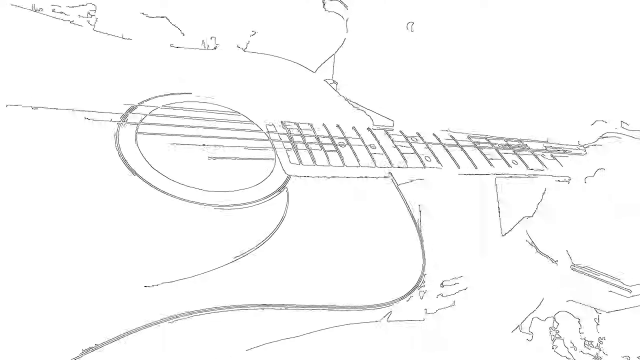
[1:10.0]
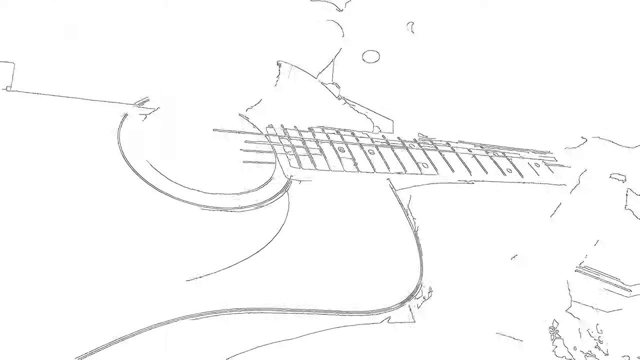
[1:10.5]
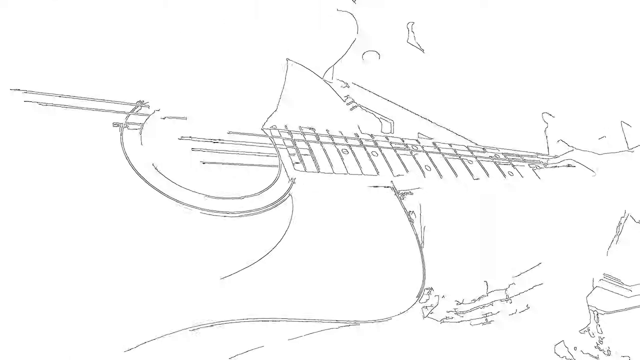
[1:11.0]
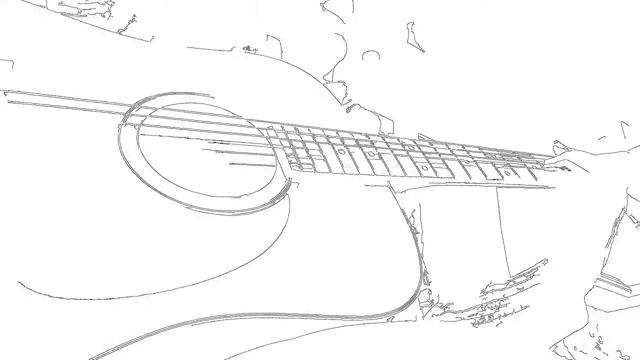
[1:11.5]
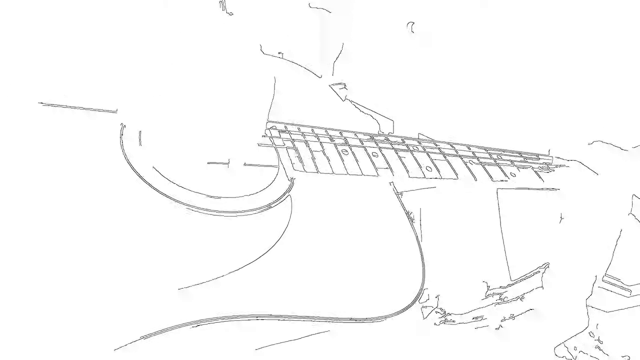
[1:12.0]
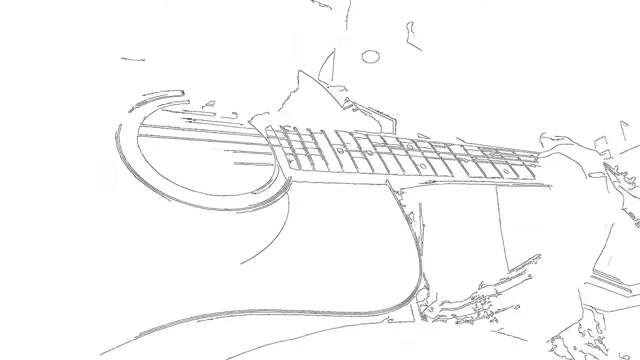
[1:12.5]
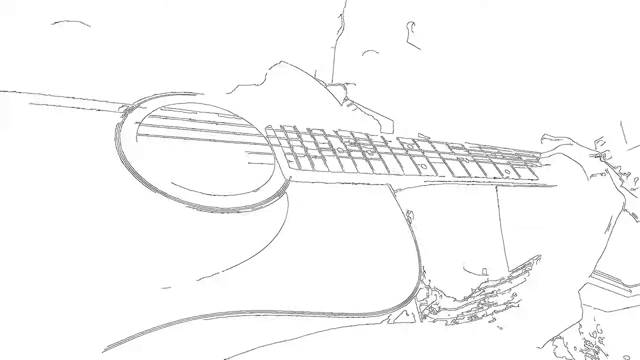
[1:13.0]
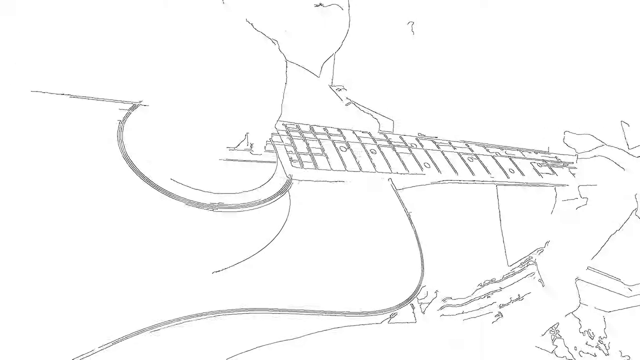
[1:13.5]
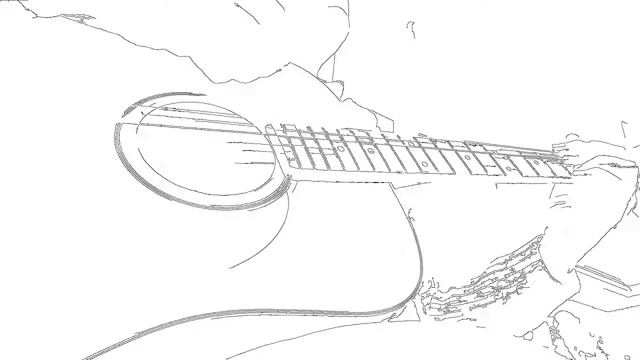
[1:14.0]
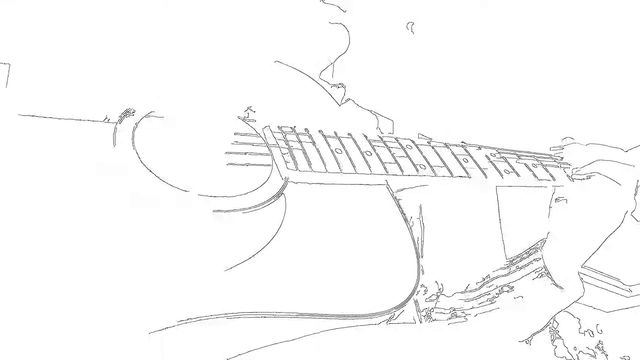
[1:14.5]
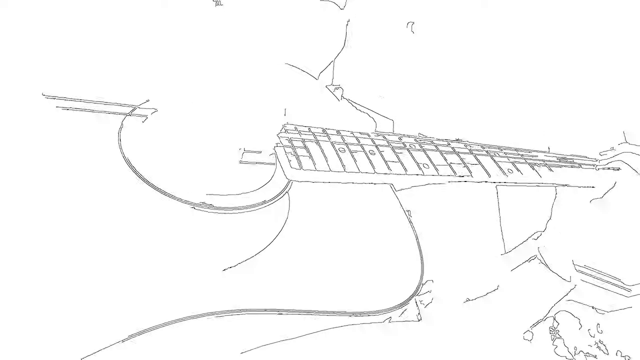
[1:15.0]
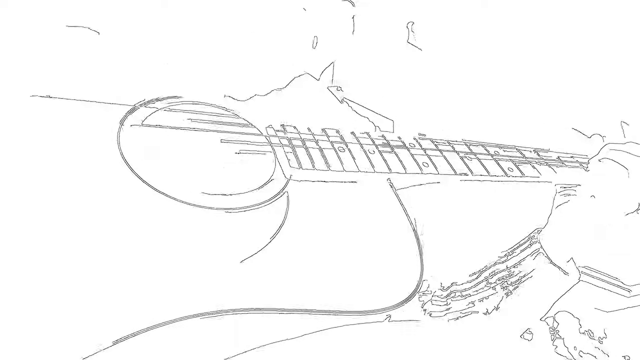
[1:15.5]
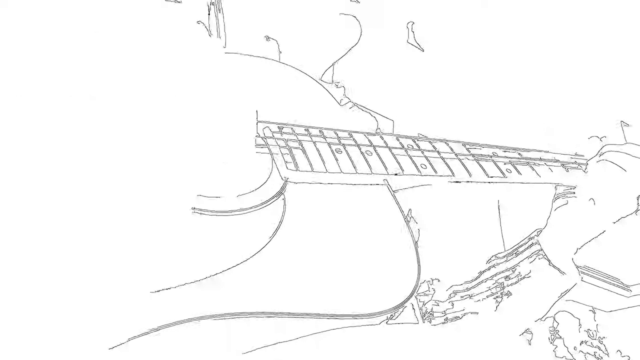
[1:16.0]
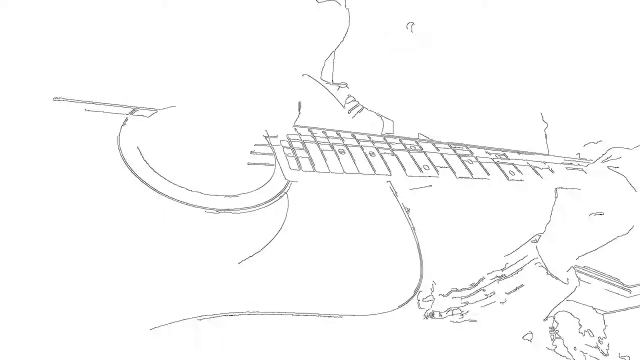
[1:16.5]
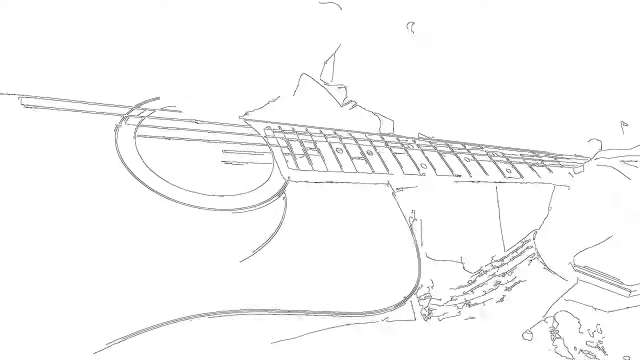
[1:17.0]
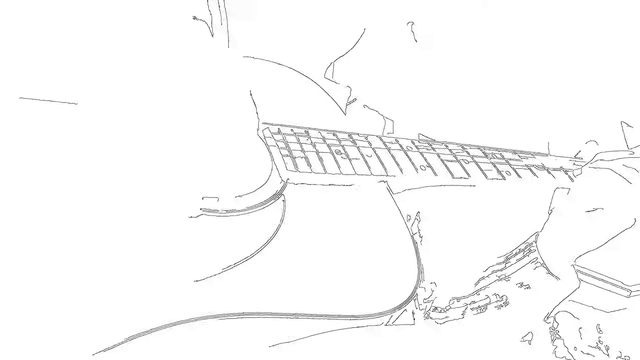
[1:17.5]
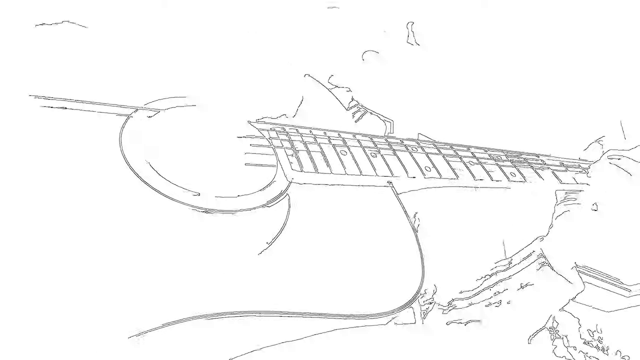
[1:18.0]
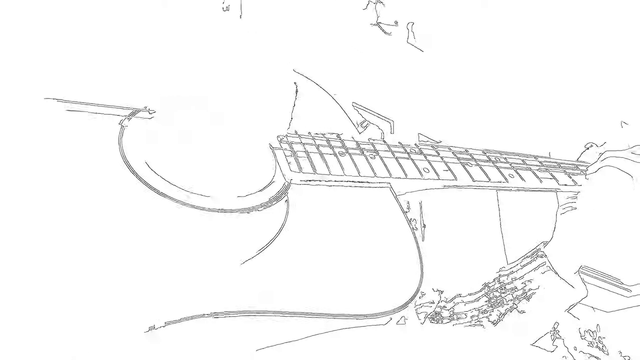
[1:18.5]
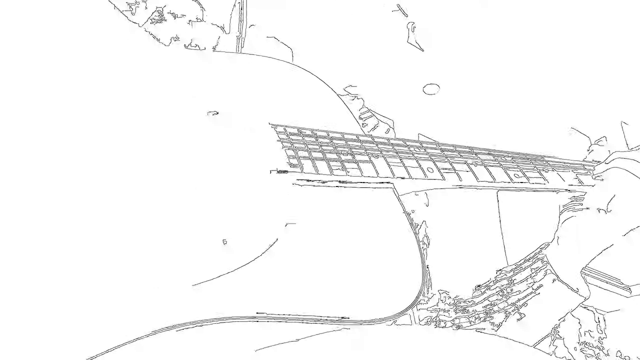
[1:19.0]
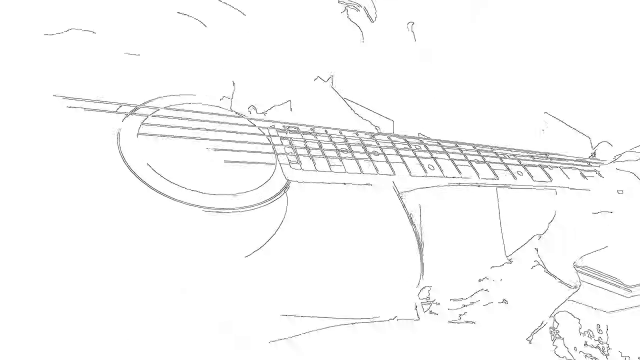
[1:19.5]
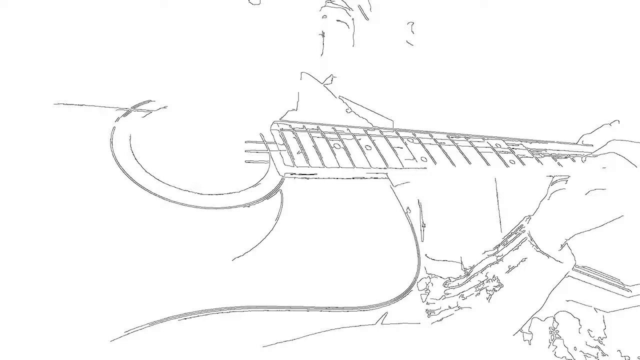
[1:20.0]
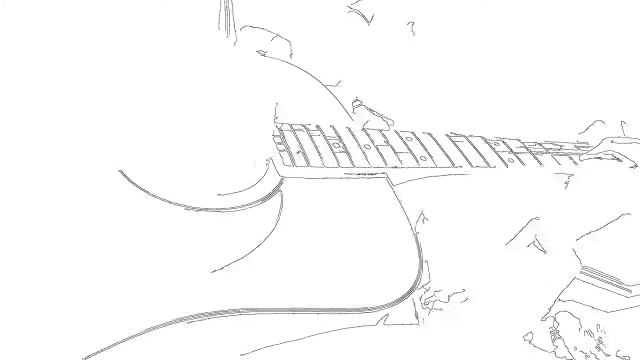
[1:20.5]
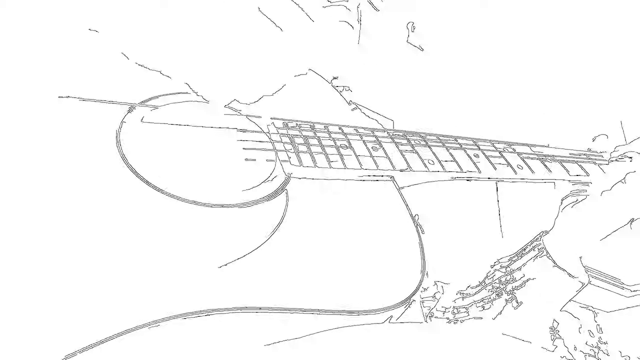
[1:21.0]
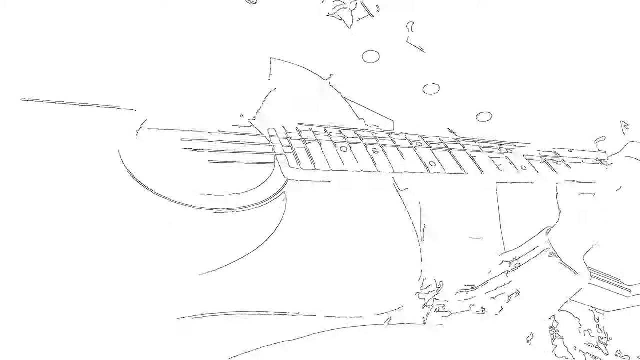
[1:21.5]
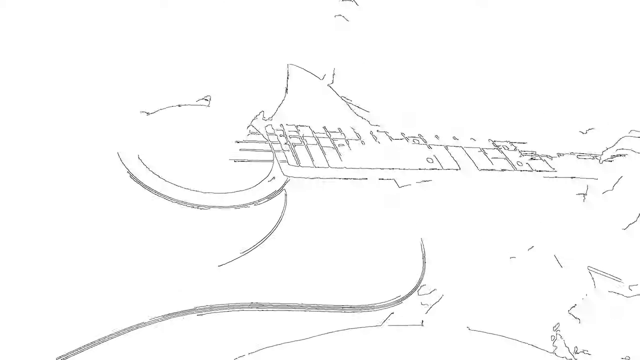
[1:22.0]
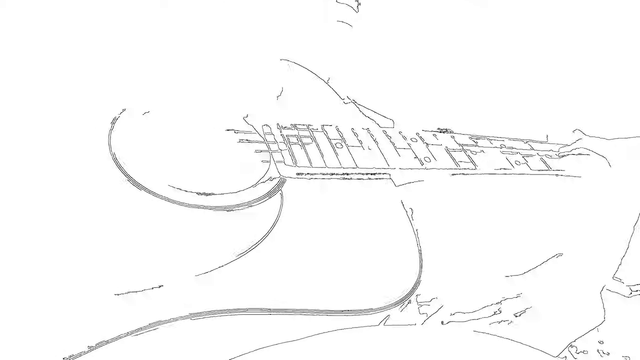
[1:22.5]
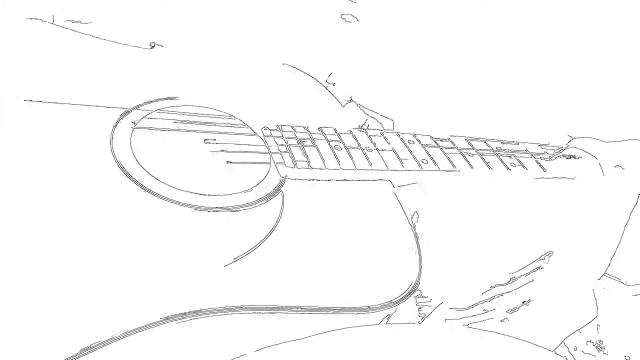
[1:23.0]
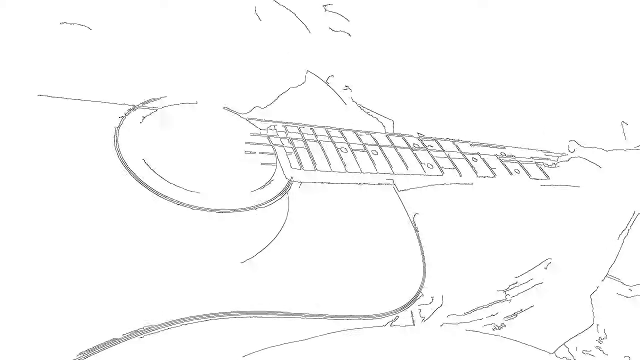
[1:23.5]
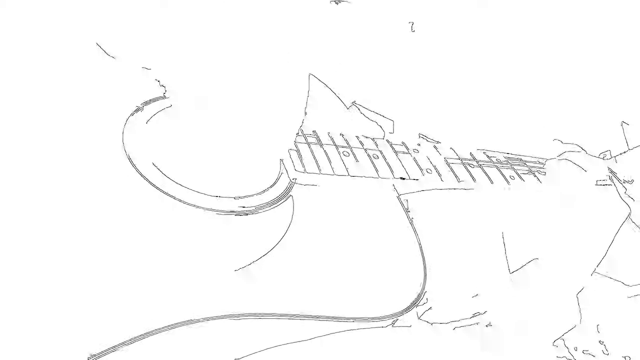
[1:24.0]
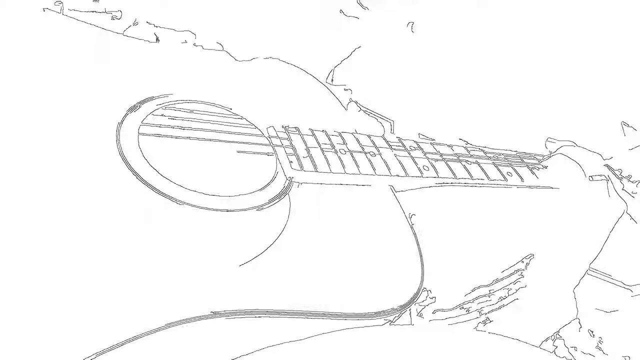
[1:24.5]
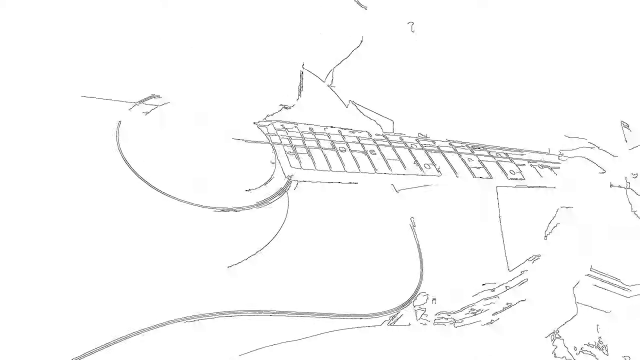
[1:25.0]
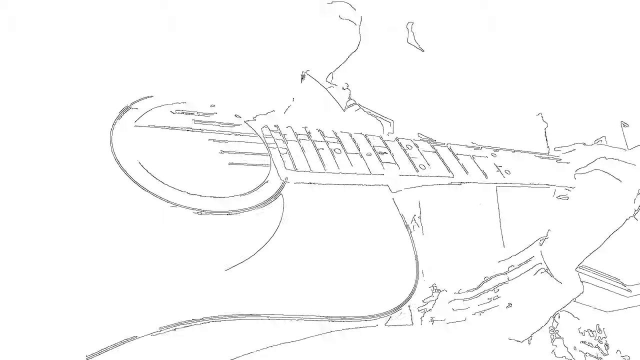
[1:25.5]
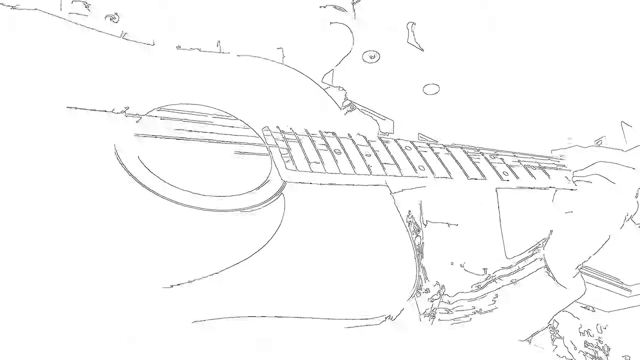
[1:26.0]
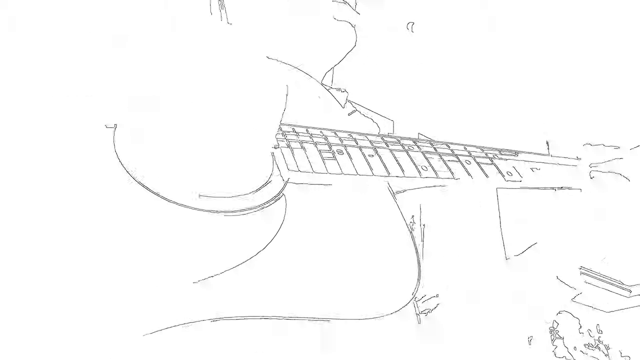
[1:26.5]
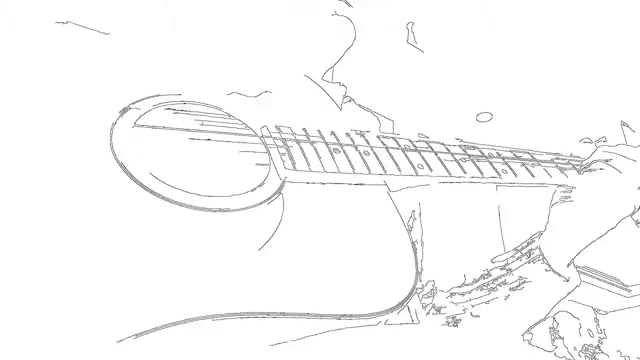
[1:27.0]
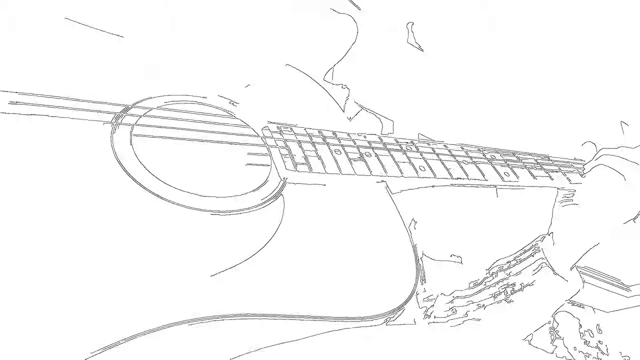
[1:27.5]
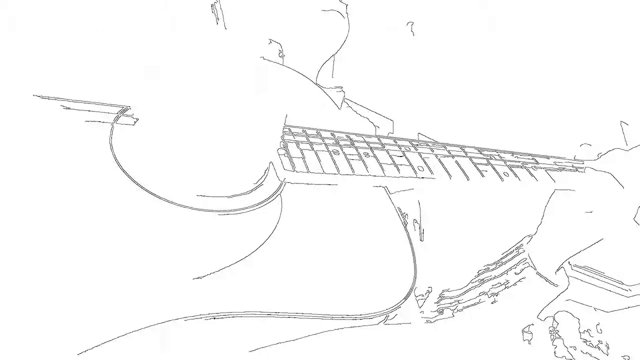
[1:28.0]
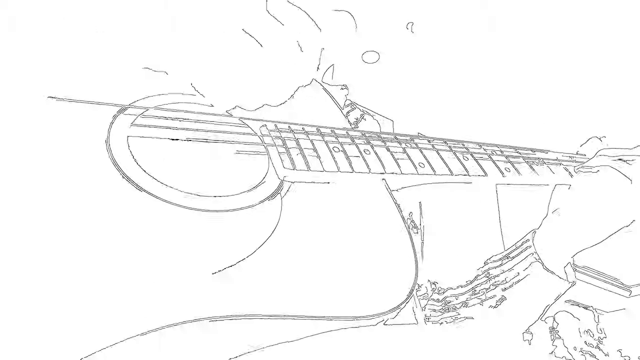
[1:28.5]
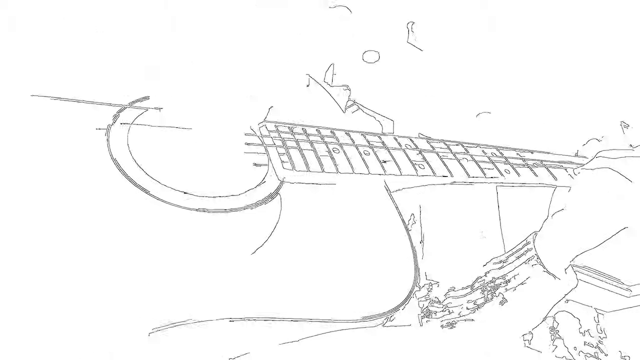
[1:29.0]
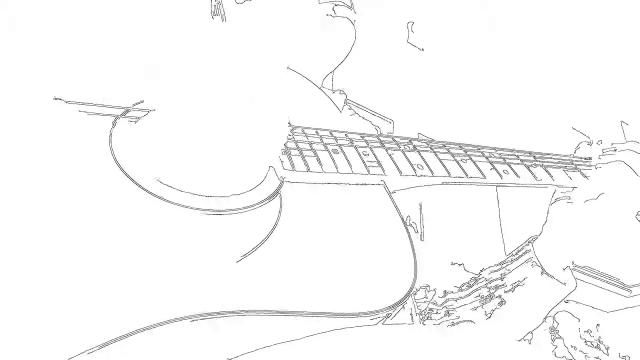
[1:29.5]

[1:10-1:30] The man picks up the tempo a bit; his right hand moves along the guitar more rapidly while his left hand seems to hold steady on just a chord or two. His mouth moves more quickly as well. Nothing behind him is disturbed, but as he sort of moves to one side while playing more rapidly, more of the kitchen counter comes into view. Under the exhaust fan is a row of various tools and utensils, most likely for cooking. The overhead cabinets have solid fronts, and the appliance box over the cabinets is placed catty-corner between two cabinets up on the edge. The area with recessed lighting above the kitchen sink also has shelving holding various bottles or sort of decorative items. He is sitting away from the counter, and a gap of space is occasionally visible when the camera sort of tilts, as is the lower half of his face as he opens his mouth to sing. He has slight stubble and wears sort of solid-colored eyeglasses, possibly in a dark color, which is hard to make out because of the illustration filter.